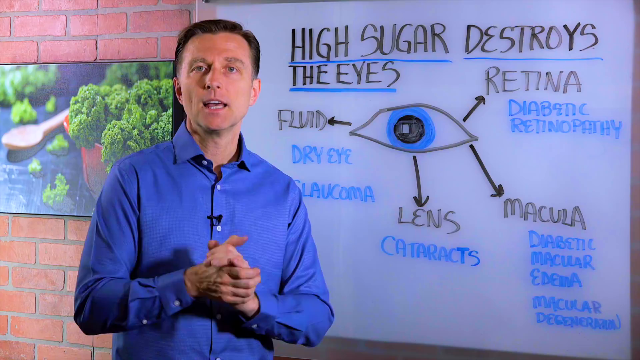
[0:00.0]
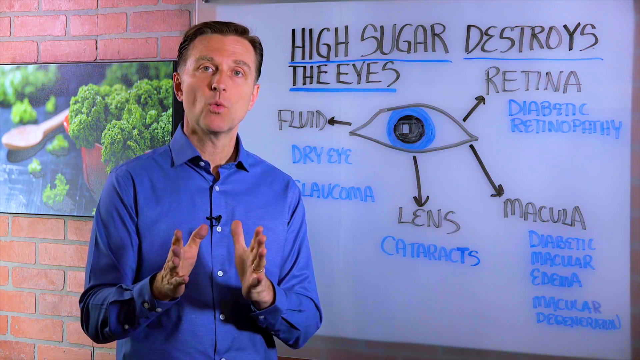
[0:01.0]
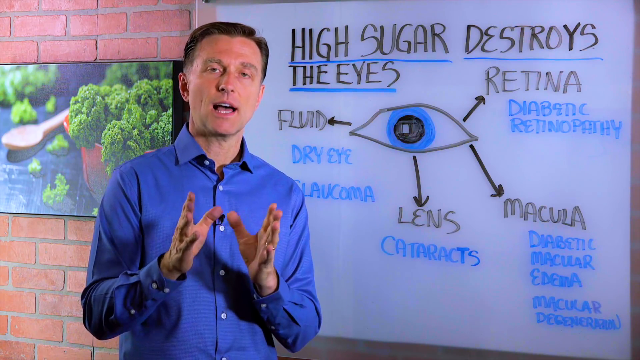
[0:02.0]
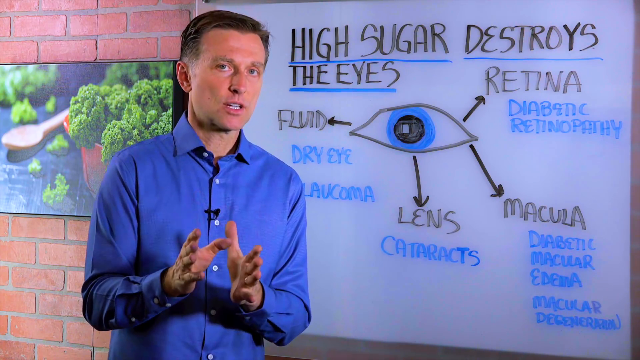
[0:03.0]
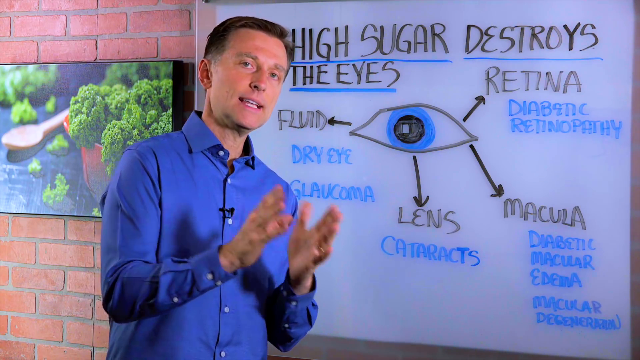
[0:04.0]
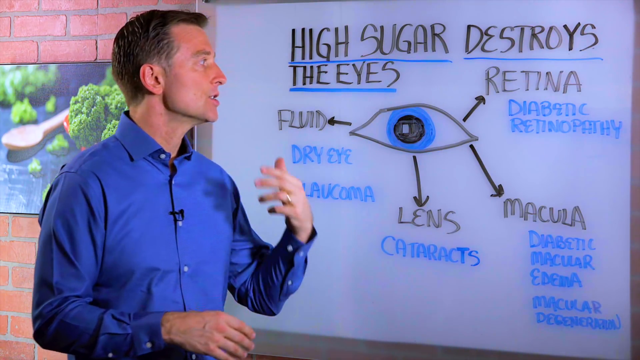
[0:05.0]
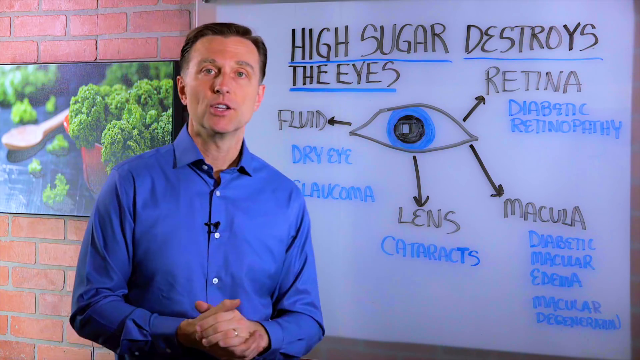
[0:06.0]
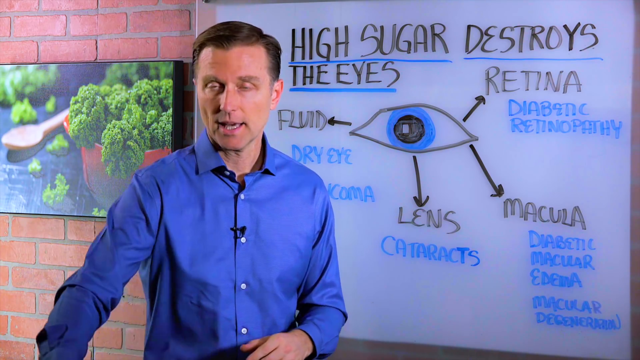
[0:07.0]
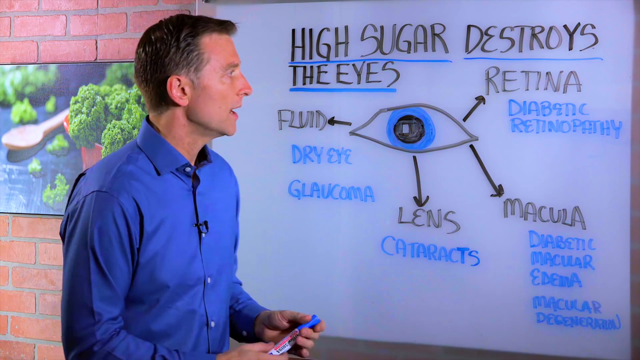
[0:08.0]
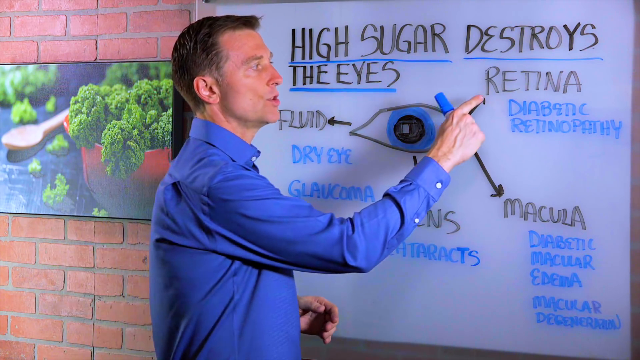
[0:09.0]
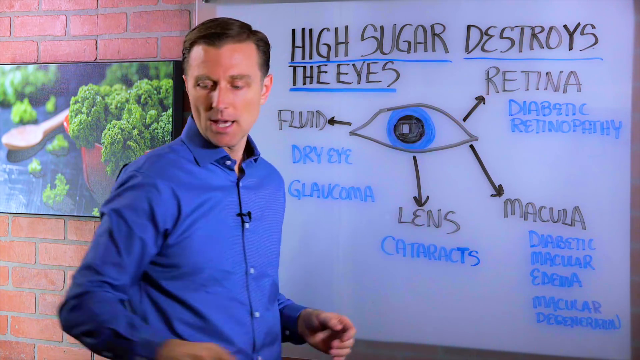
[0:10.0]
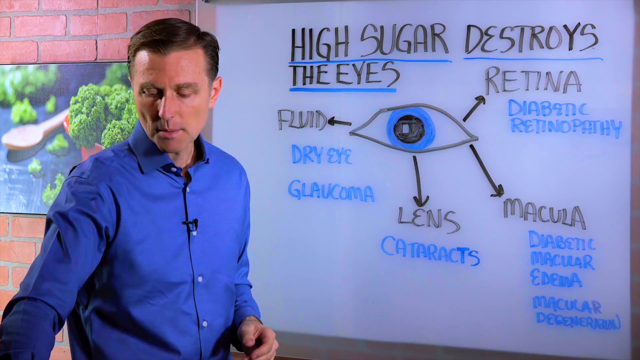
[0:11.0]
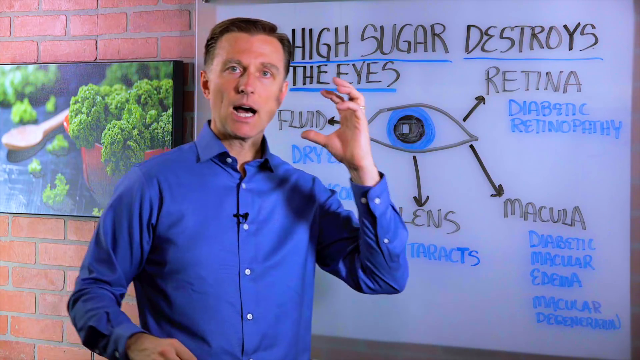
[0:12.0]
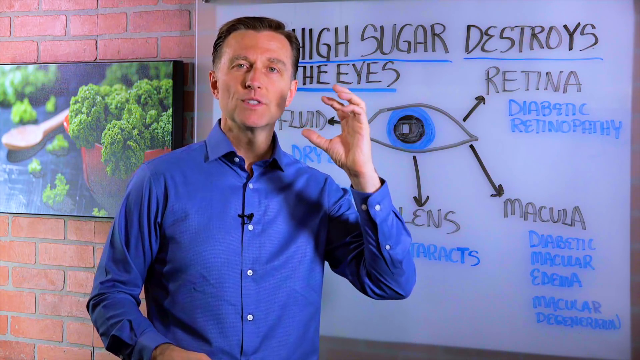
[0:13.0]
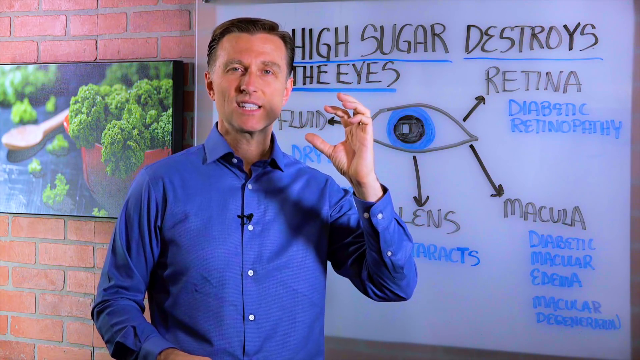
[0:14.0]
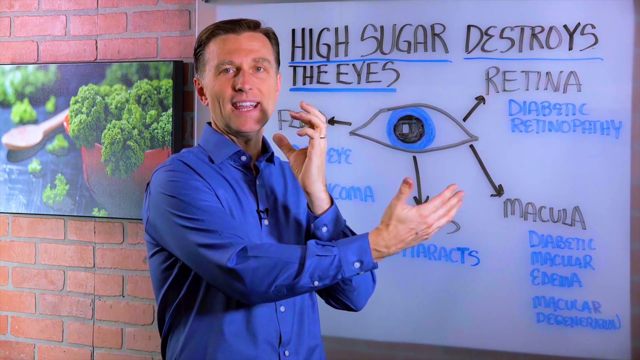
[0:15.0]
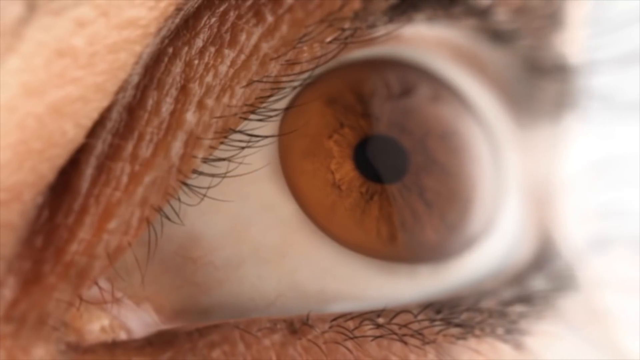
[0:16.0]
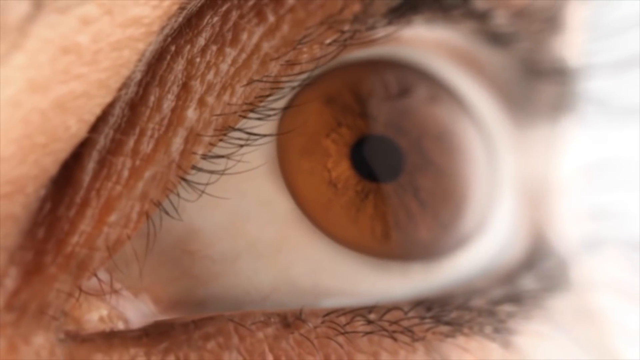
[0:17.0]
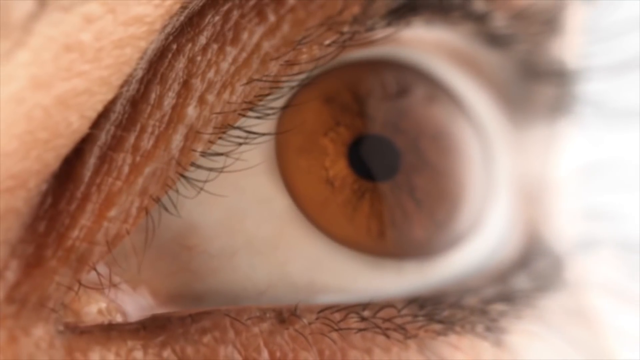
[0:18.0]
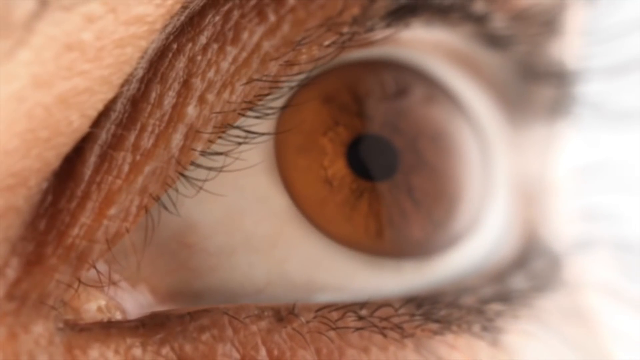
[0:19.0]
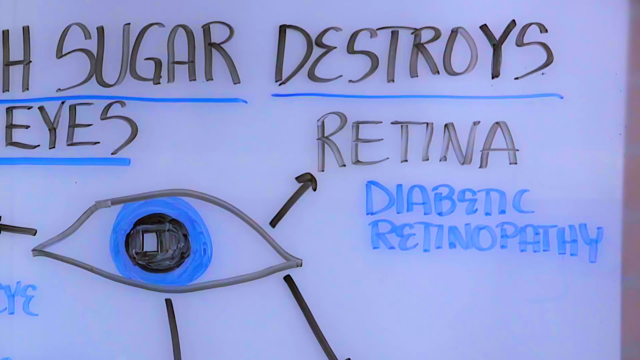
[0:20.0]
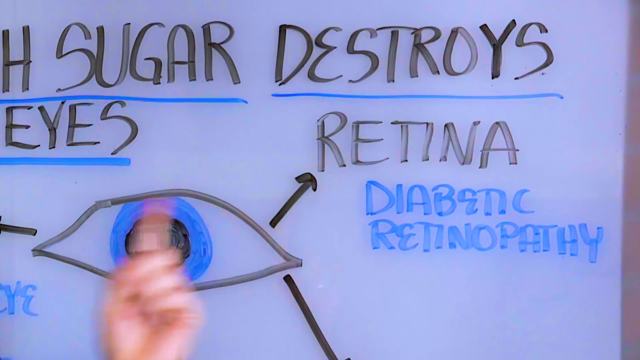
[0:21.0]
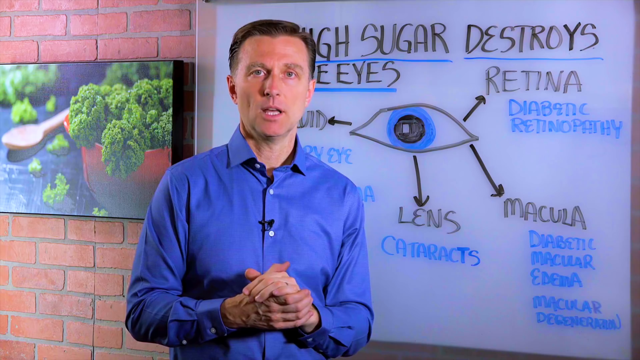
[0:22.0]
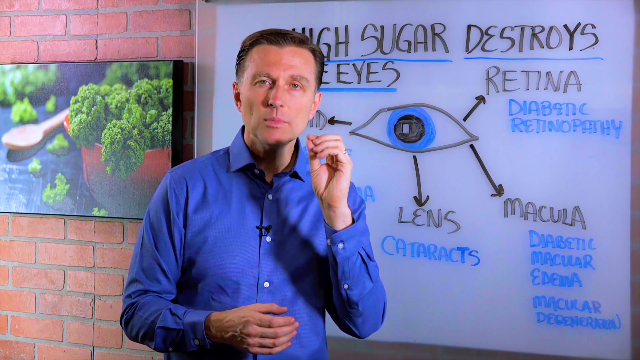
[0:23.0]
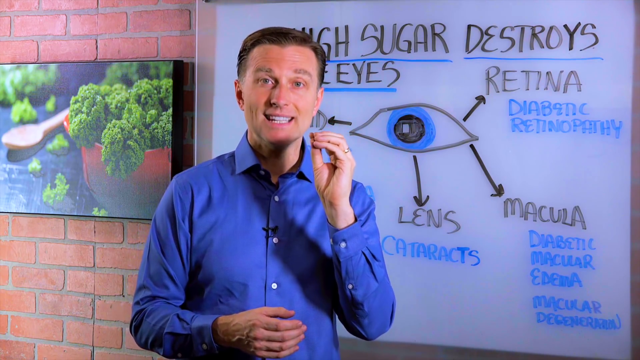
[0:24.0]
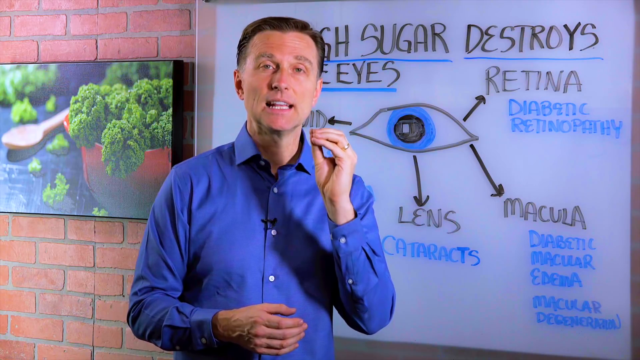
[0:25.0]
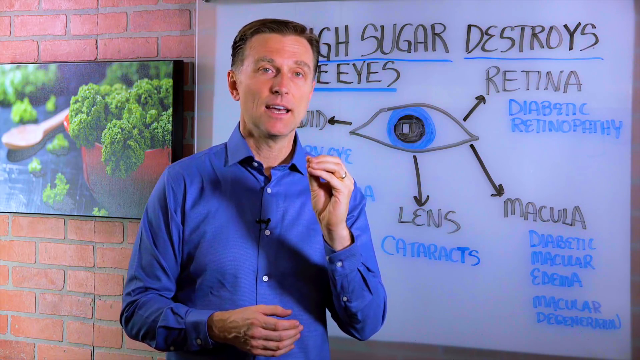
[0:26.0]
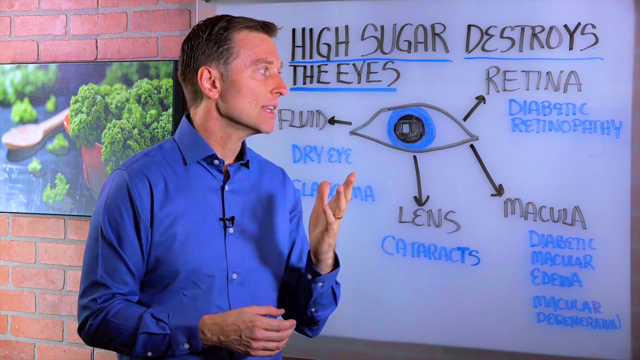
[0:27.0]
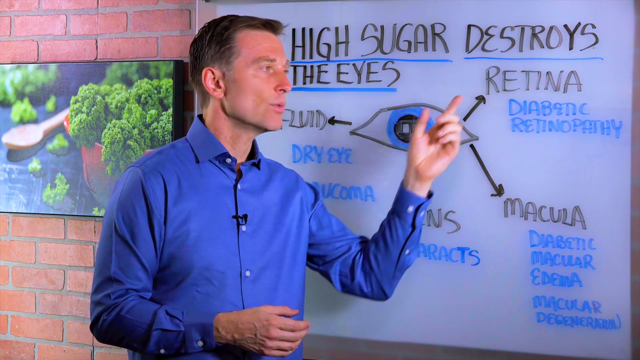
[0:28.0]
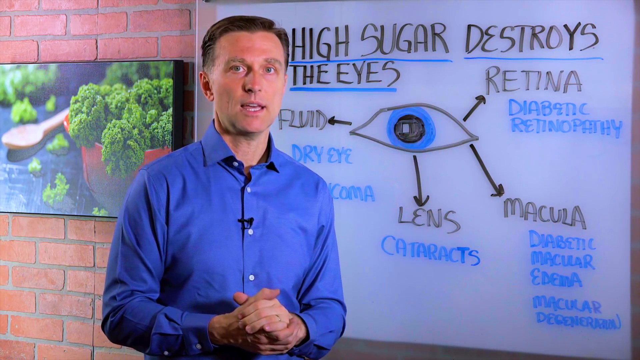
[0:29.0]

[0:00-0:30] A well-known doctor, Dr. Berg, gives a presentation on how sugar relates to the eyes. He stands before a large white board on which he has drawn a diagram of one eye with dry erase markers, coloring it blue and using black and blue markers with arrows pointing out sections of the eye. He looks to be in his mid to late 40s and wears a dark blue button-down professional shirt with the top button open. Behind him is a red brick wall. He holds his hands apart, facing one another with palms open, then turns slightly toward the board. With his right hand he taps the word "retina," and his left hand almost points out an eye. A quick shot follows of a real human eye, brown, looking upward to the right.